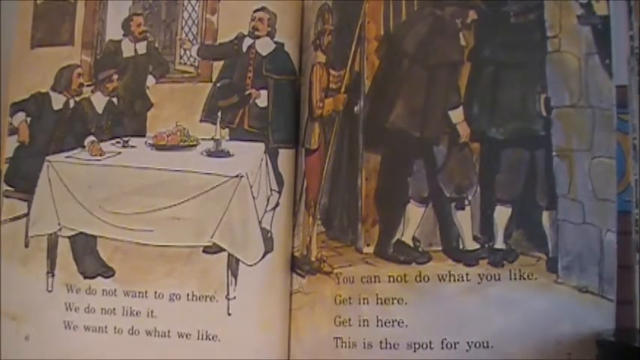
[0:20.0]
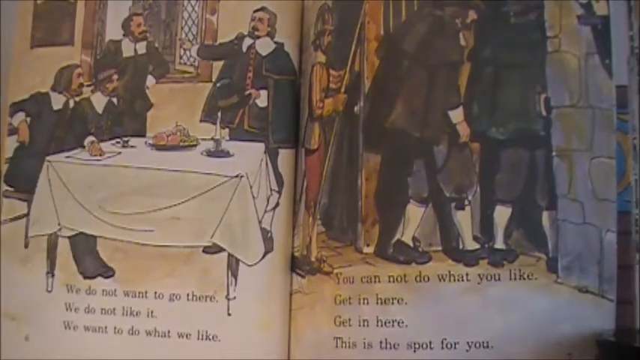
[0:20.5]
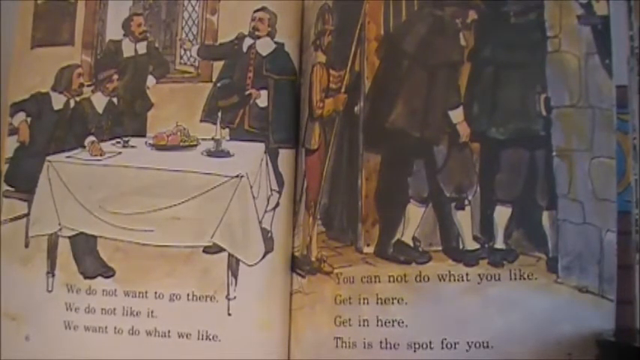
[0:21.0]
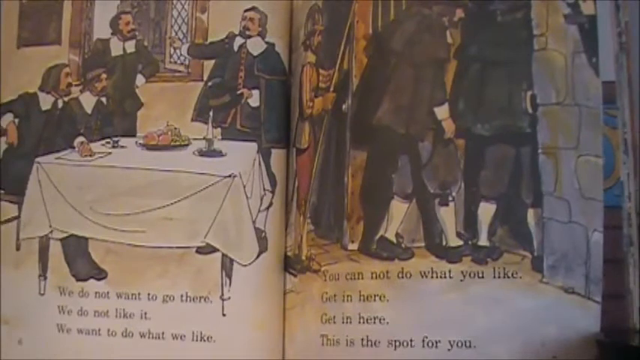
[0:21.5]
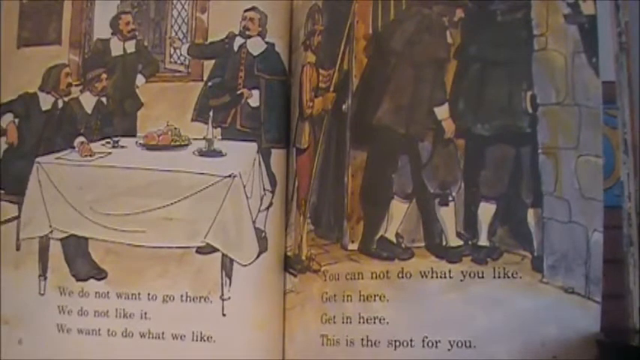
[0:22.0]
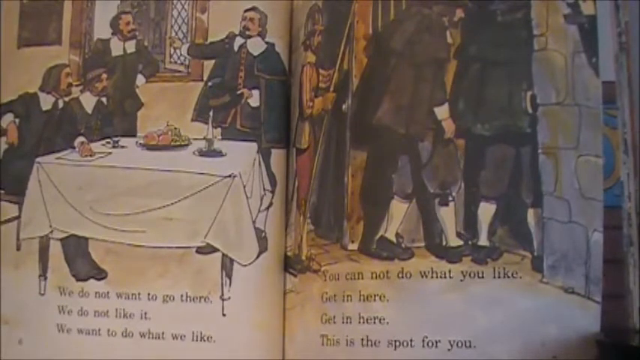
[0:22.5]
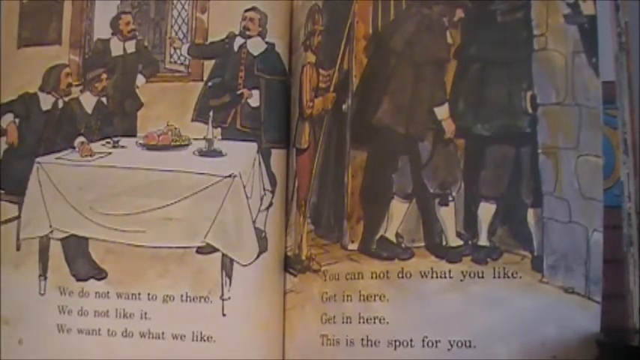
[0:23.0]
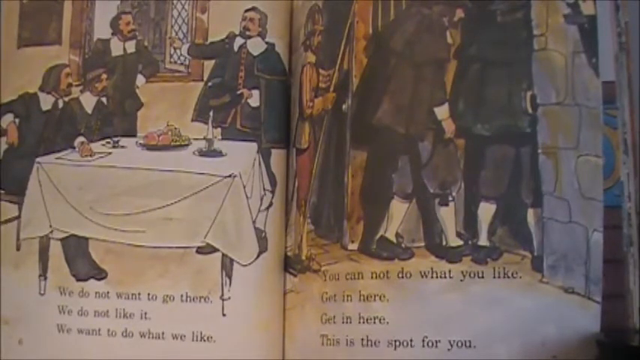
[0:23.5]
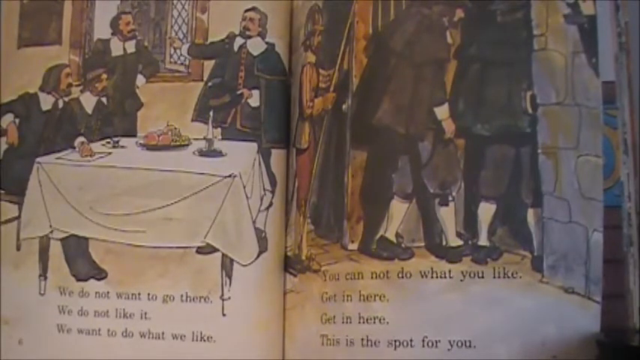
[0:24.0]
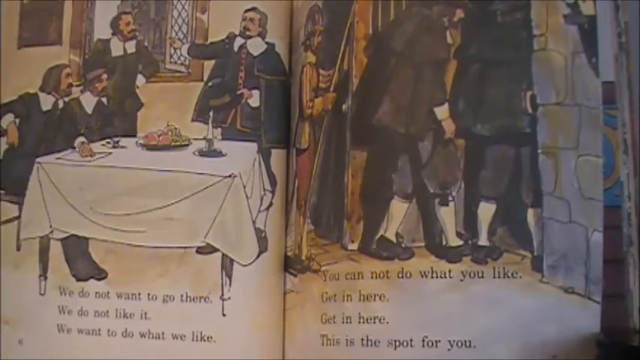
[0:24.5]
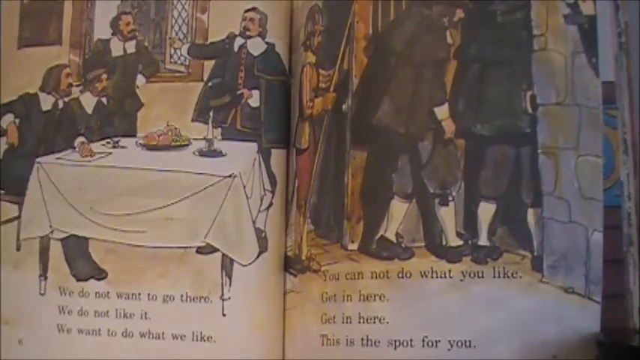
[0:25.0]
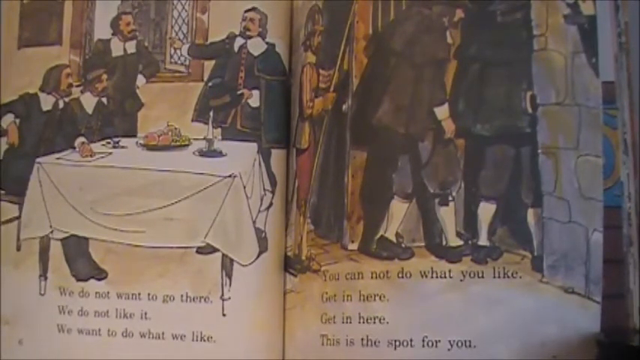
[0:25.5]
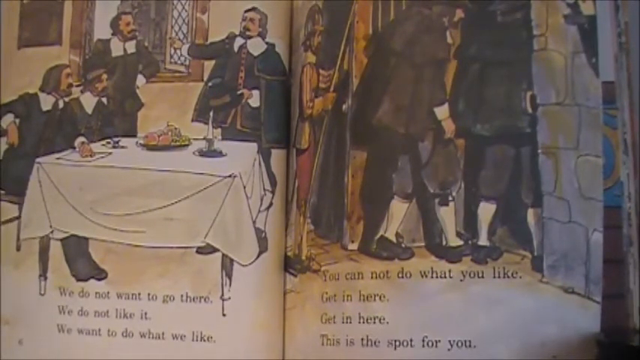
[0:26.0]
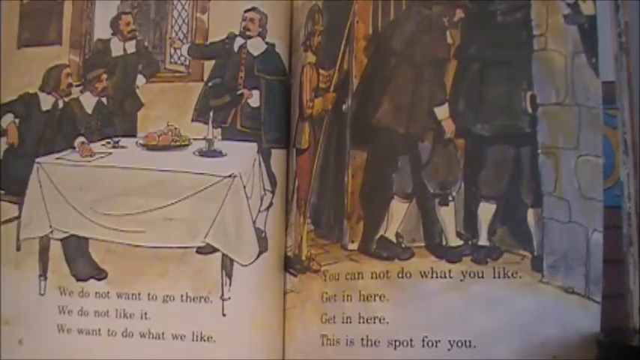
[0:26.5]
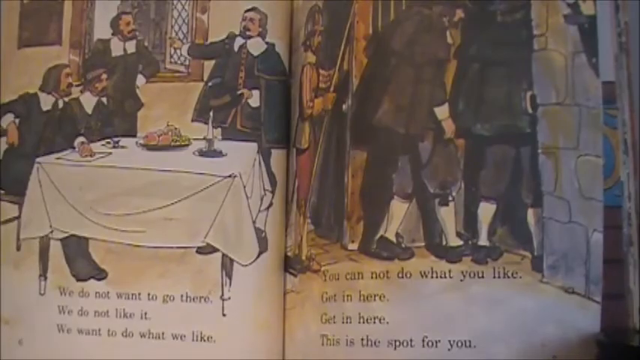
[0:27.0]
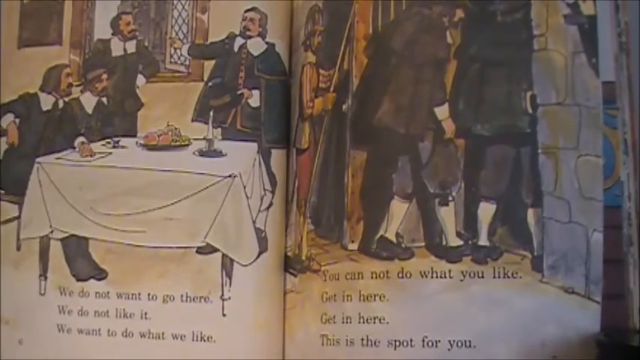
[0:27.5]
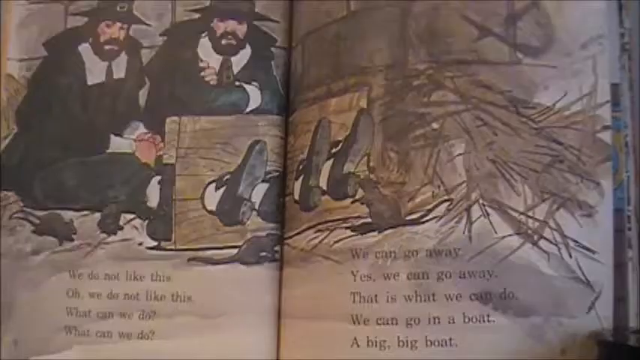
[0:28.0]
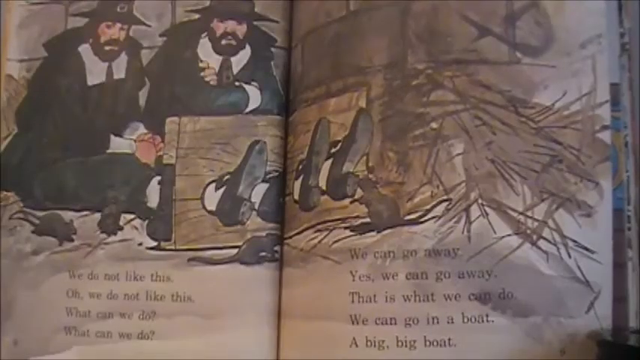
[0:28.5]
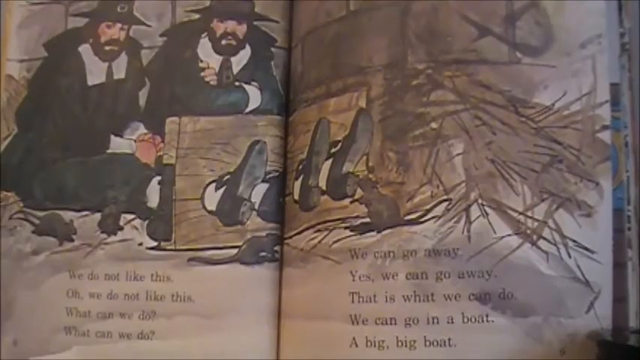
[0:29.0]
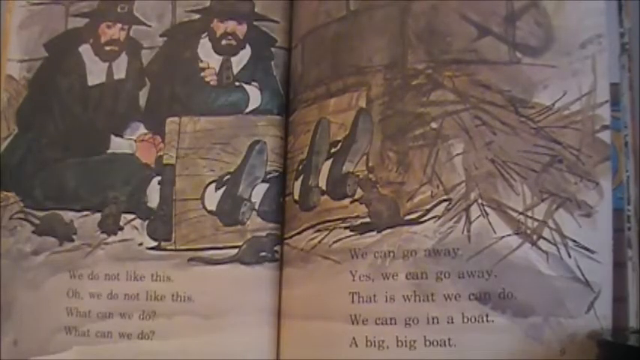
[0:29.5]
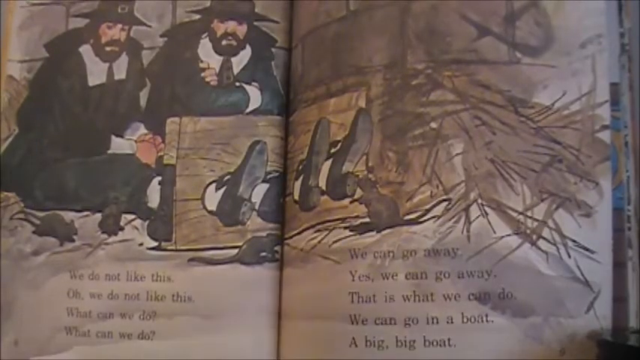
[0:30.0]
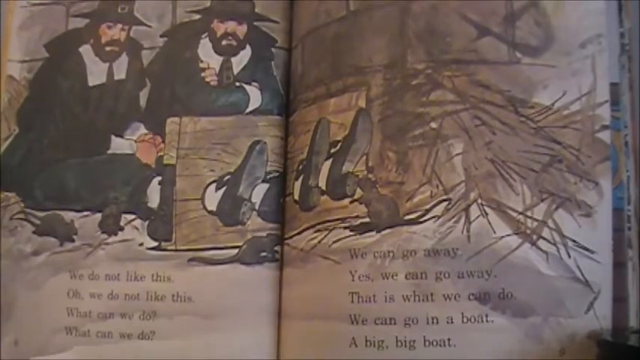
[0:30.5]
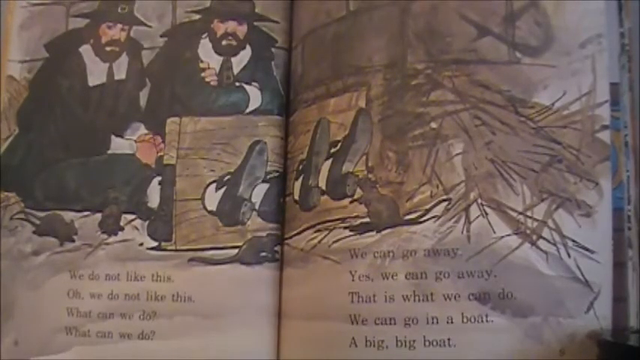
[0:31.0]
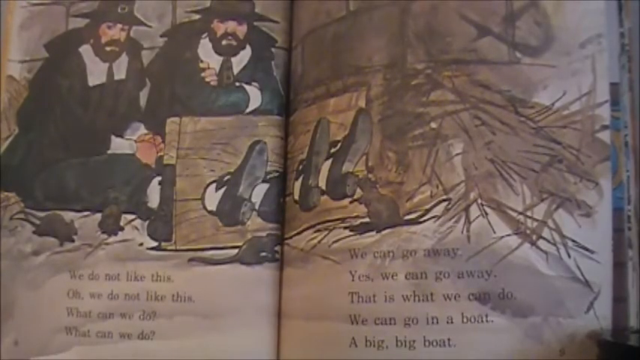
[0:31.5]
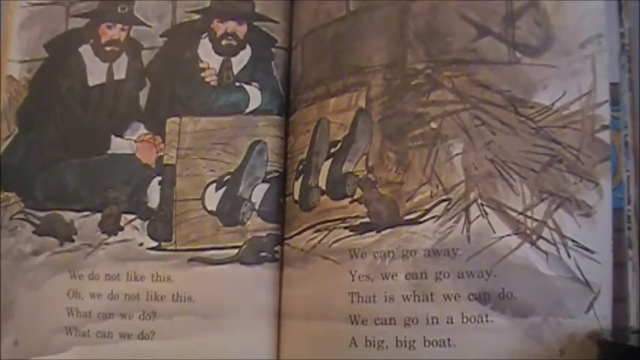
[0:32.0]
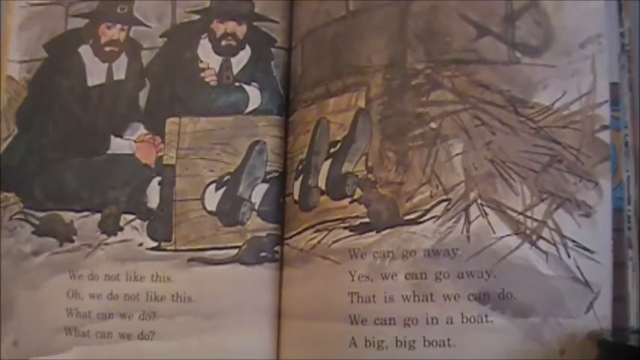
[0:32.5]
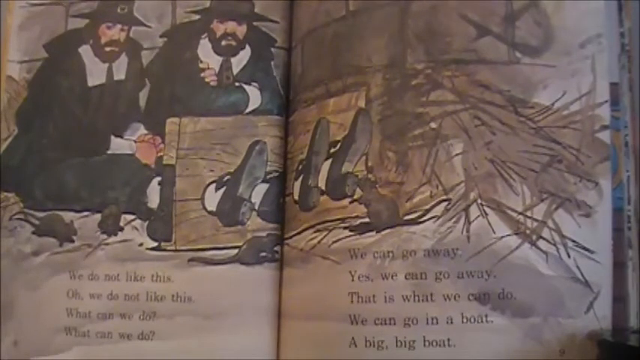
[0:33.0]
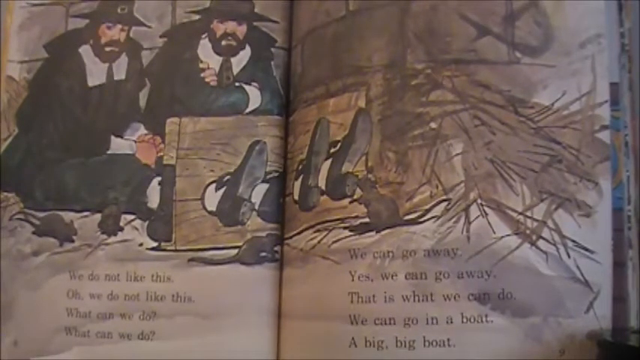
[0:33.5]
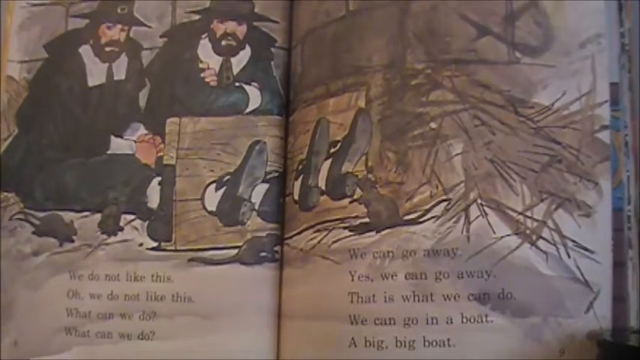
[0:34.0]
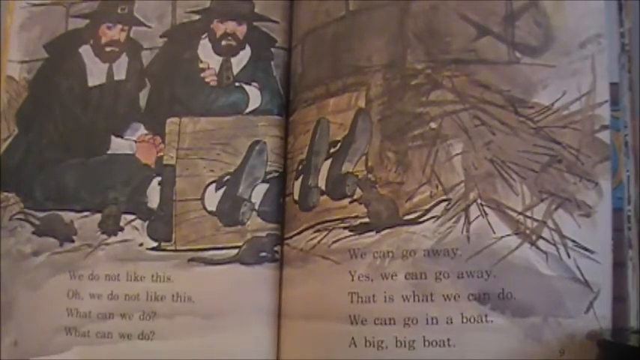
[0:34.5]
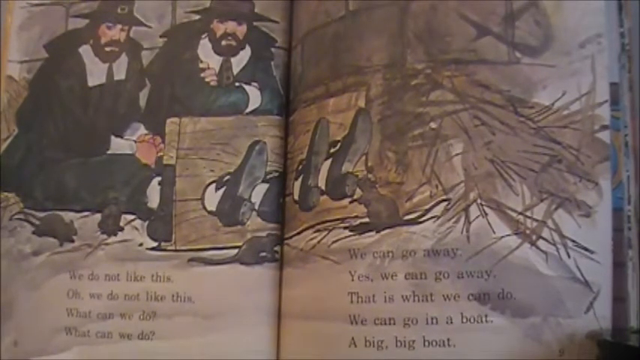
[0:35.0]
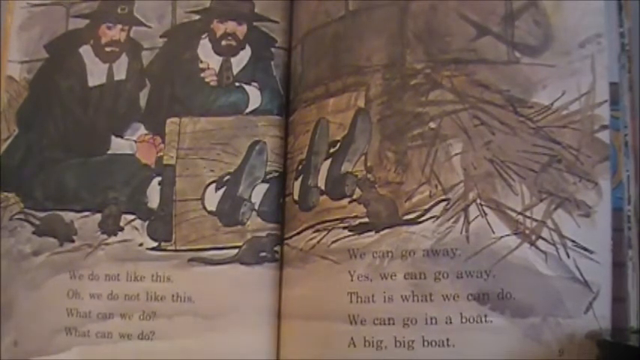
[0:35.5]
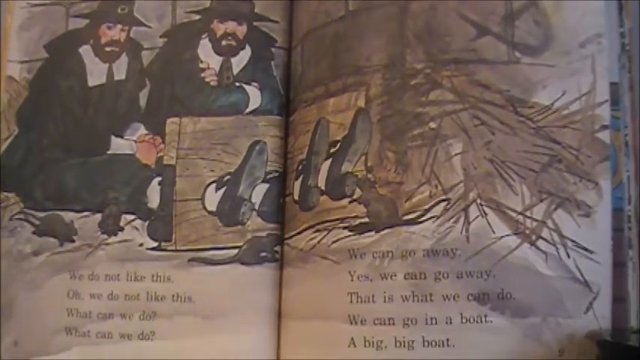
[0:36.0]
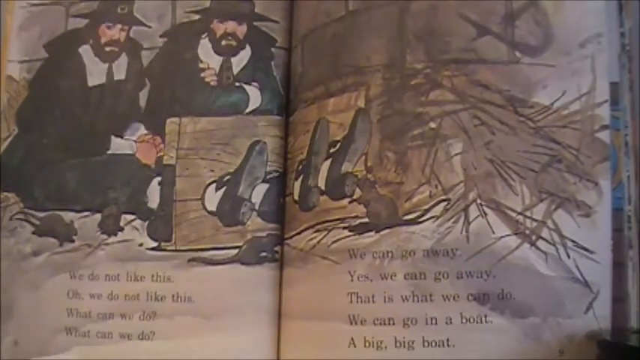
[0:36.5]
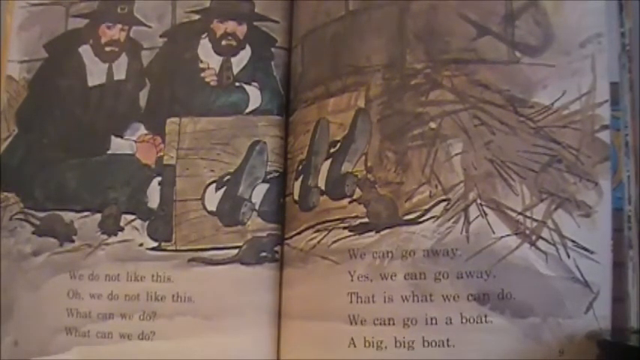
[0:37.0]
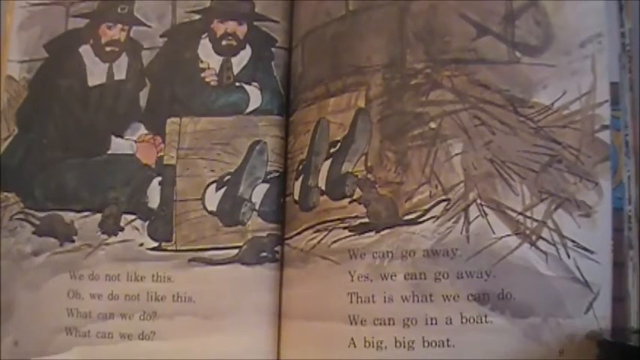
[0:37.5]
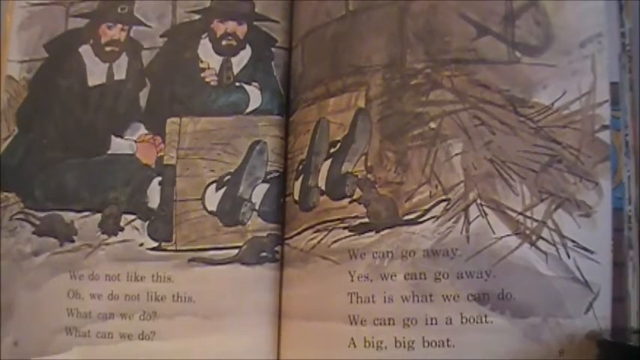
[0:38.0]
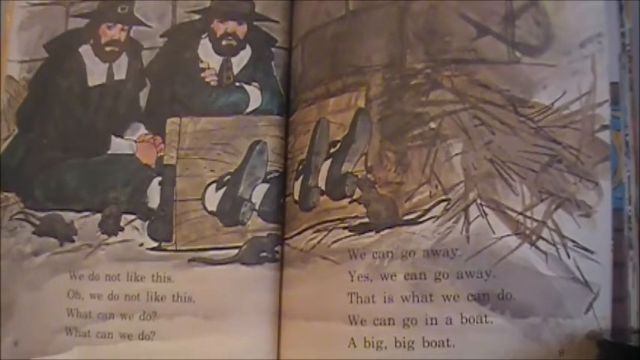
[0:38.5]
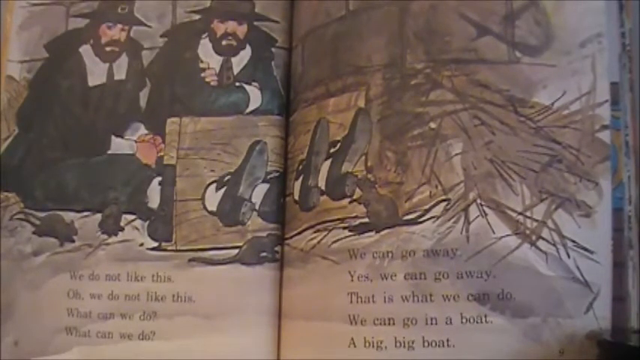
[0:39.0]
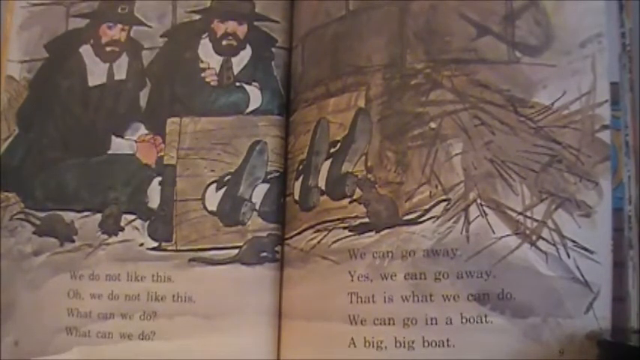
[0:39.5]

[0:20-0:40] More interior pages are shown. The first shows a meeting of pilgrim men around a table, and then the men are seen apparently leaving the city, with what looks like a guard ushering them through the doors. The next page shows two pilgrim men sitting with their feet in stocks in what looks like a jail cell, with some rats around them and what looks like a bale of straw. Each is a full-page illustration, with text at the bottom telling the story. The pilgrim men are all dressed in the same style, with black pantaloons and jackets, large white collars and white socks, in contrast to the brightly dressed guard and king.